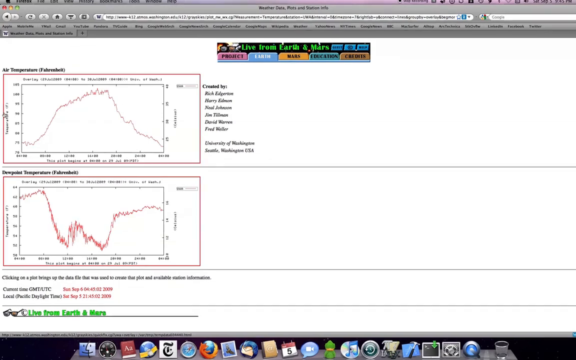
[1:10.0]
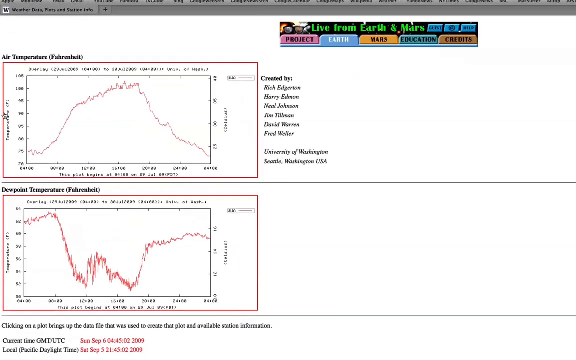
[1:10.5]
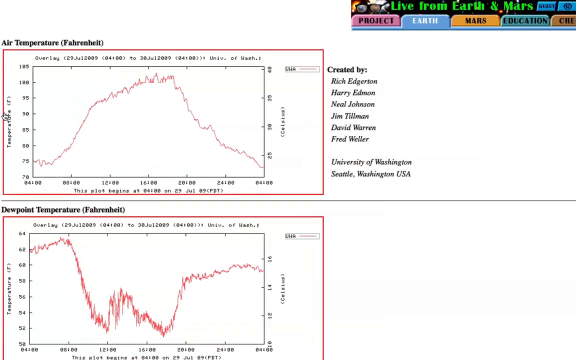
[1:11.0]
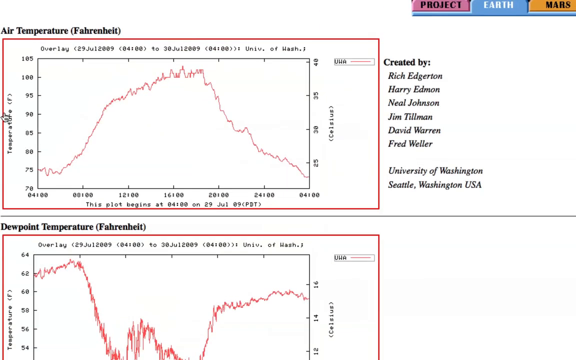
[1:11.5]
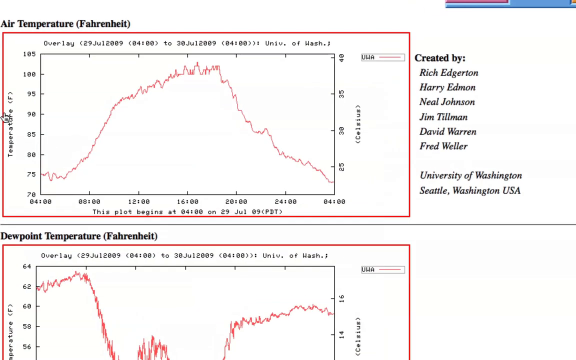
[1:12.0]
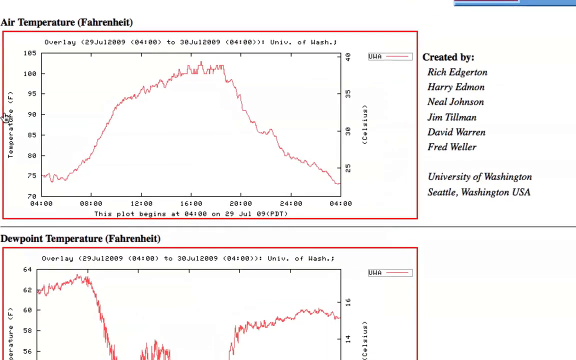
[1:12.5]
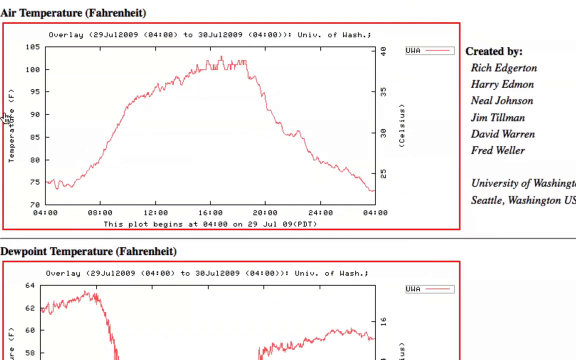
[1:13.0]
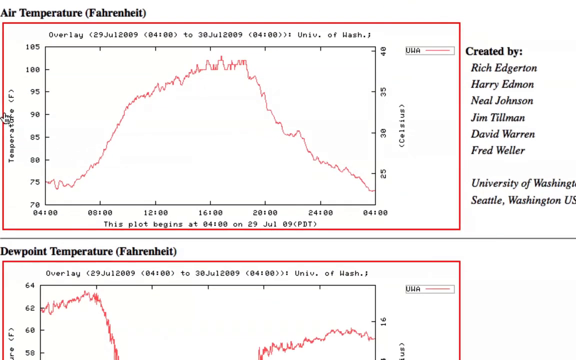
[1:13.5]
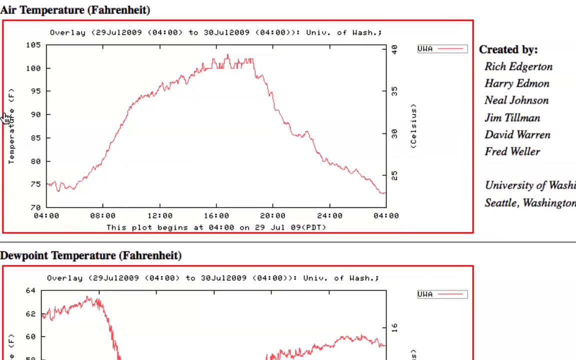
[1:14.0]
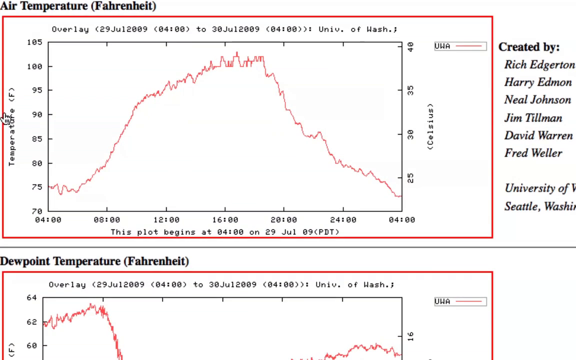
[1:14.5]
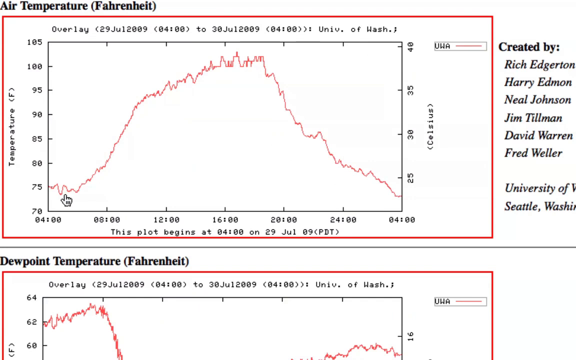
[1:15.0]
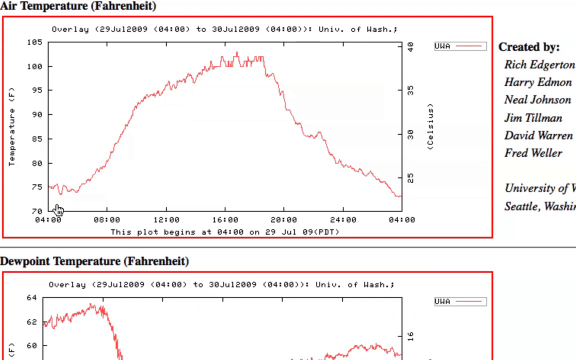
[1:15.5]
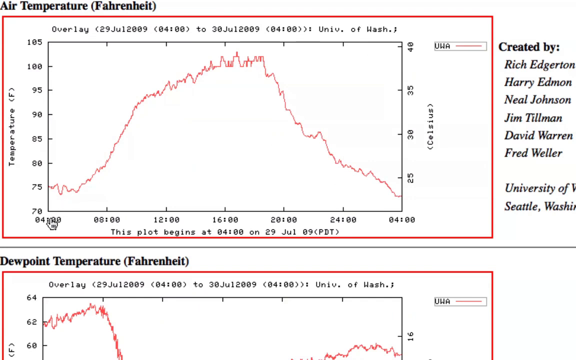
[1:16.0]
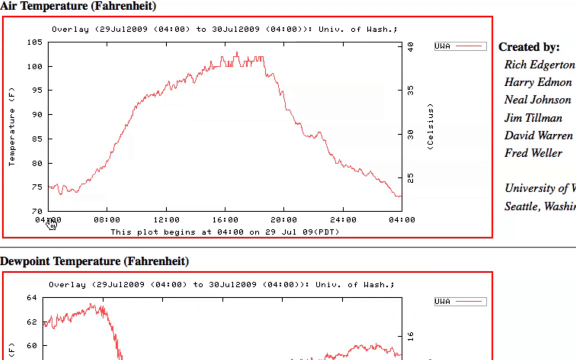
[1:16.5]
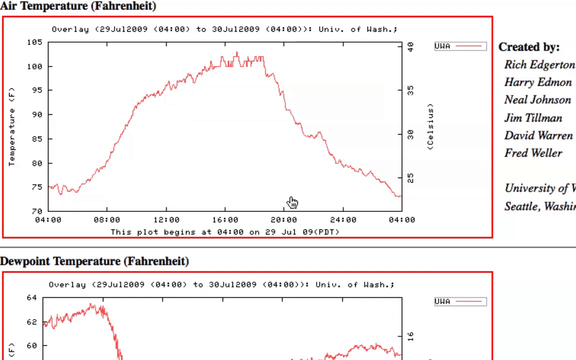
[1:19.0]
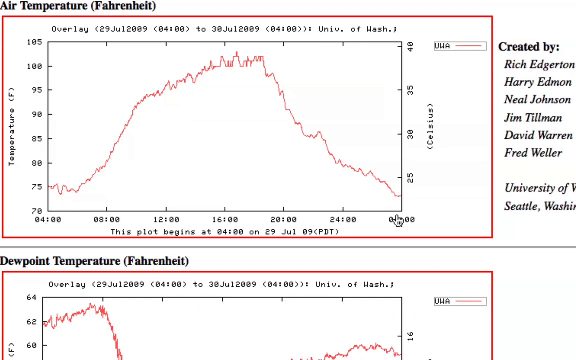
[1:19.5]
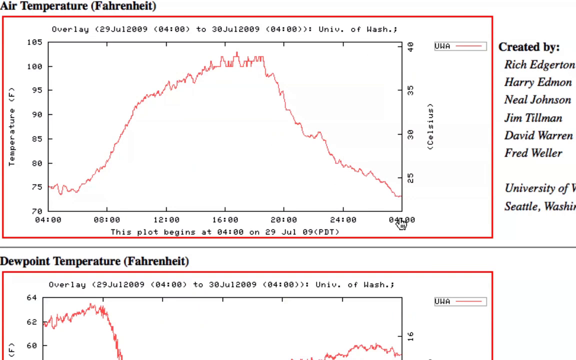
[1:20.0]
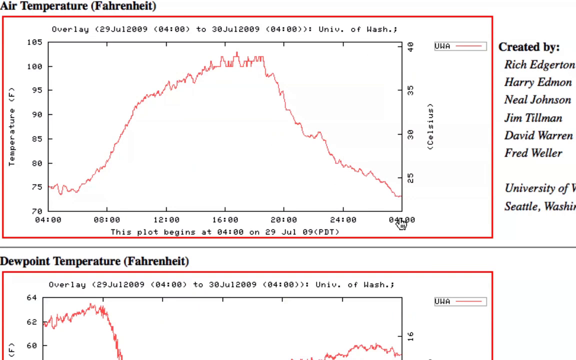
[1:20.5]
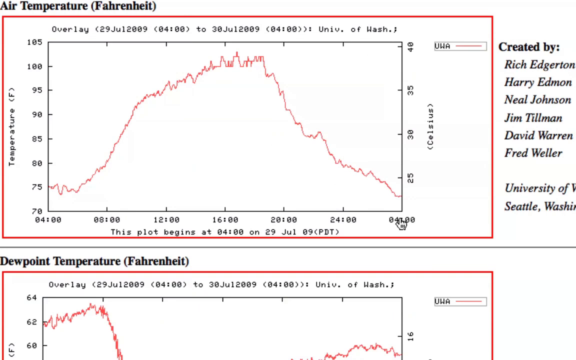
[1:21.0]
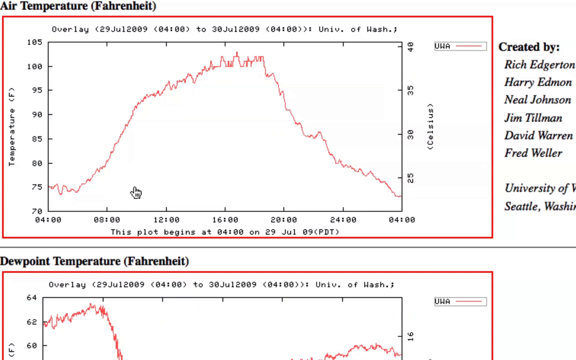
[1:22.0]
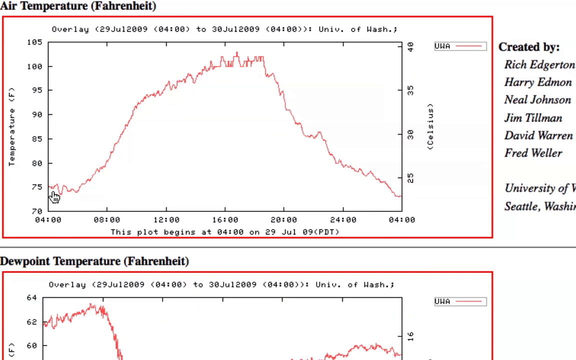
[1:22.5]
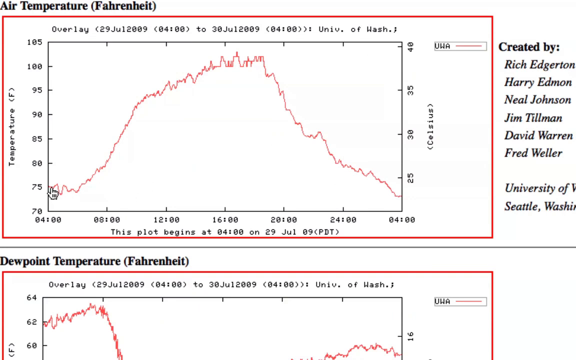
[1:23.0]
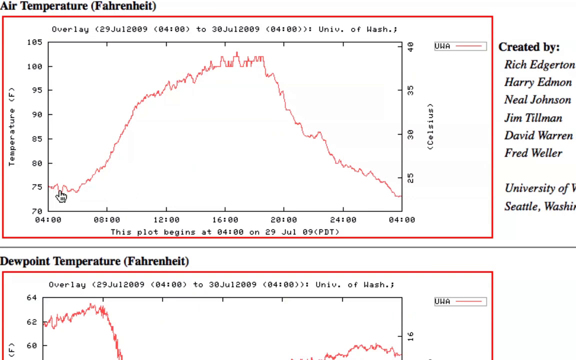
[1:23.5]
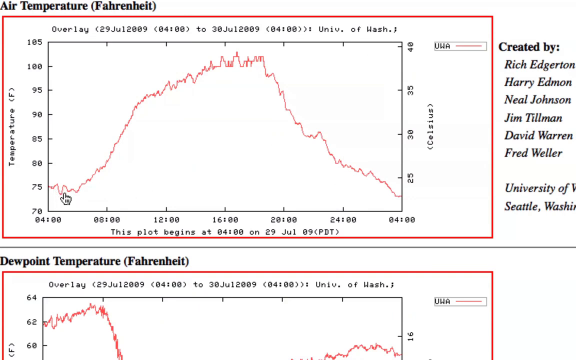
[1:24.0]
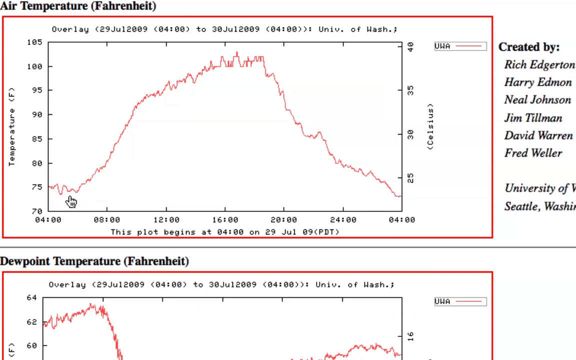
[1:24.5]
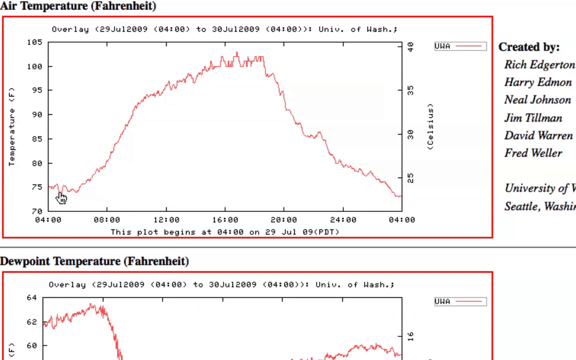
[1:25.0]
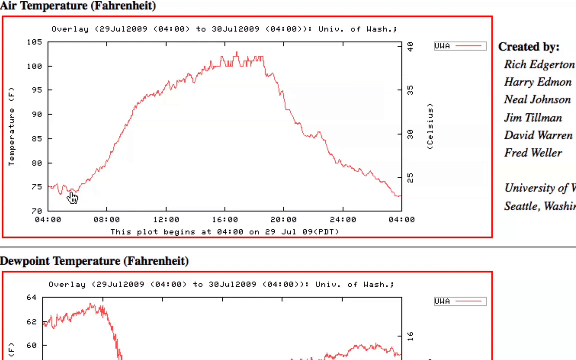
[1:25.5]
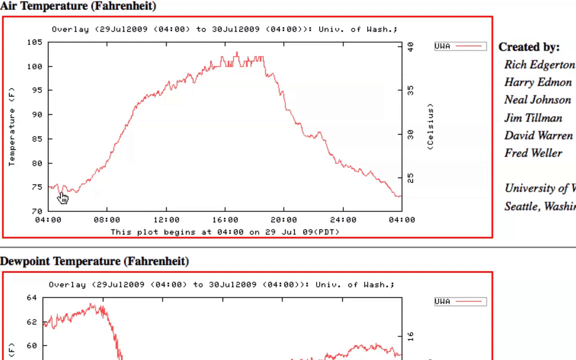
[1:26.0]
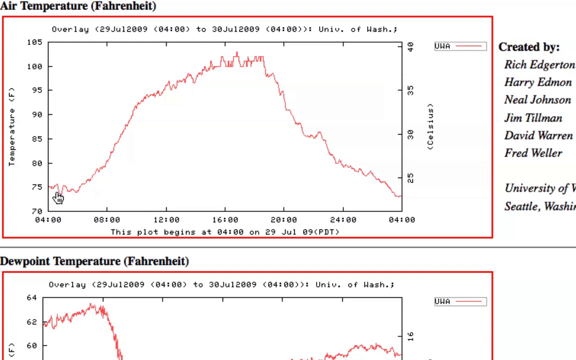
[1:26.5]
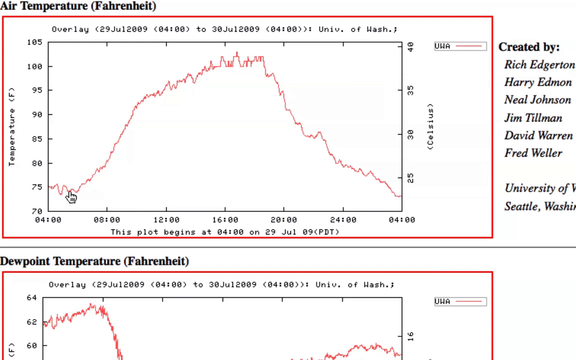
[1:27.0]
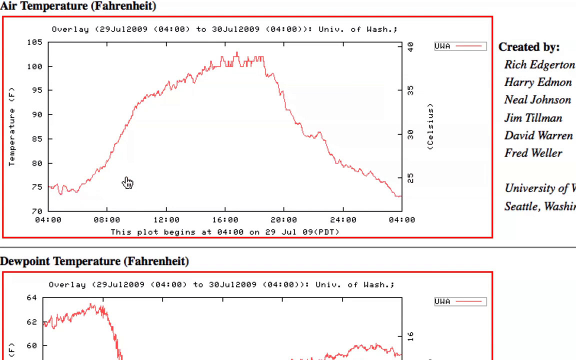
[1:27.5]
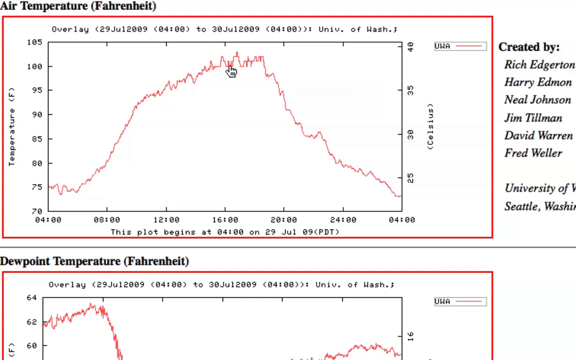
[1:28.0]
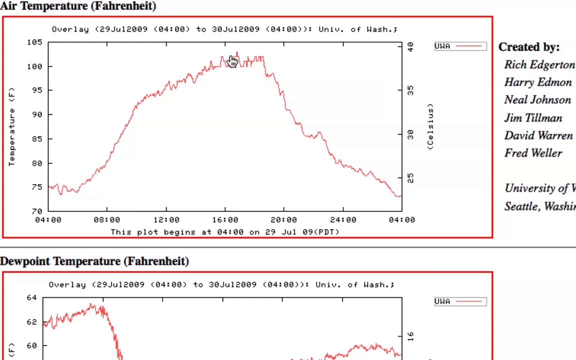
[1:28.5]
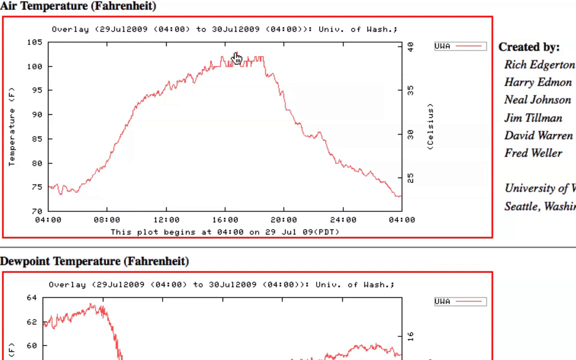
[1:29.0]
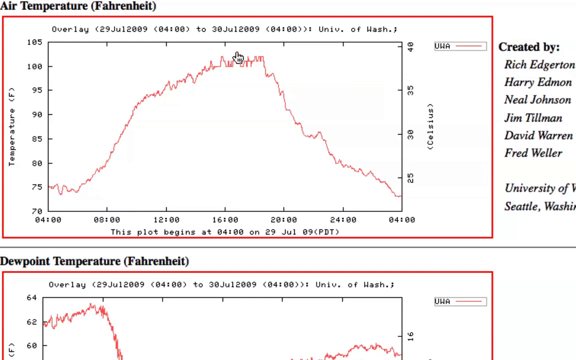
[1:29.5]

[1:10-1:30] The view zooms into the air temperature graph, which shows temperature in Fahrenheit on one axis and time on the bottom, running from July 29th to July 30th. The hottest point is July 30th at 1600 hours, reaching about 100 degrees Fahrenheit, or around 38 degrees Celsius. The graph says it was created at the University of Washington by Rich Edgerton, Harry Edman, Neil Johnson, Jim Tillman, David Warren and Fred Weller. The plot begins at four o'clock on July 29th of 2009. The bottom graph shows the dew point temperature over the same time frame, July 29th to July 30th of 2009, four o'clock to four o'clock, a full 24 hours. The cursor keeps kind of highlighting around four o'clock on the 29th, apparently pointing something out. There are quite a few blips where the temperature goes up and down quite drastically right around four o'clock, and again at 1600 hours on the 30th there are peaks going up and down.